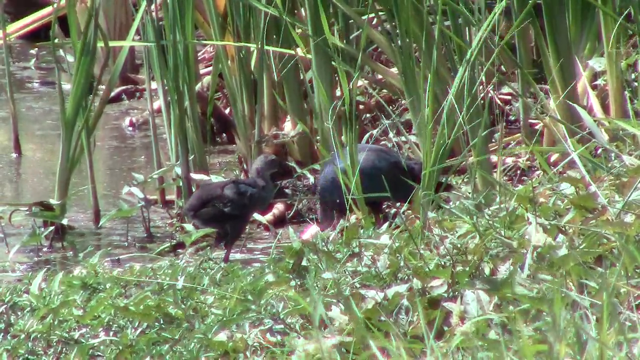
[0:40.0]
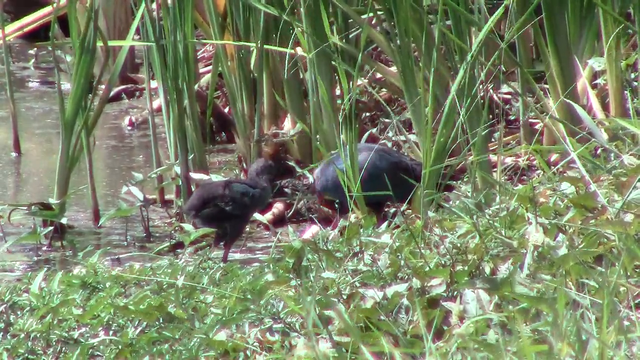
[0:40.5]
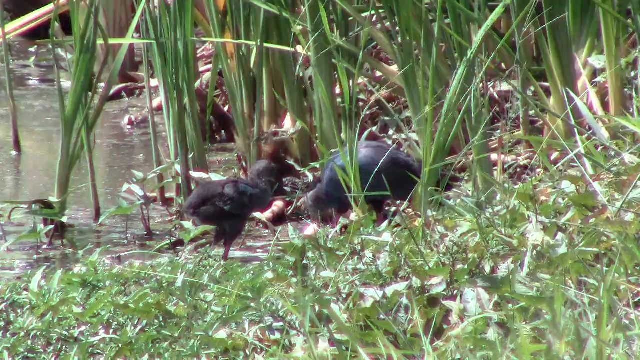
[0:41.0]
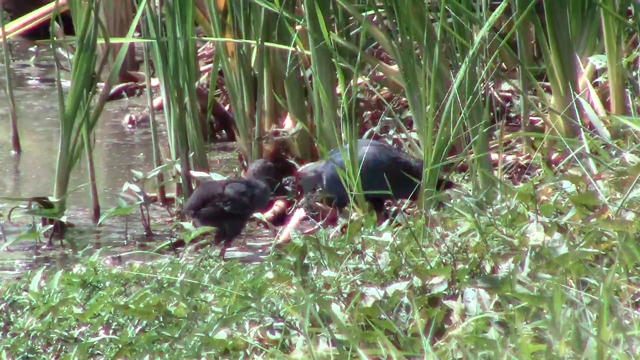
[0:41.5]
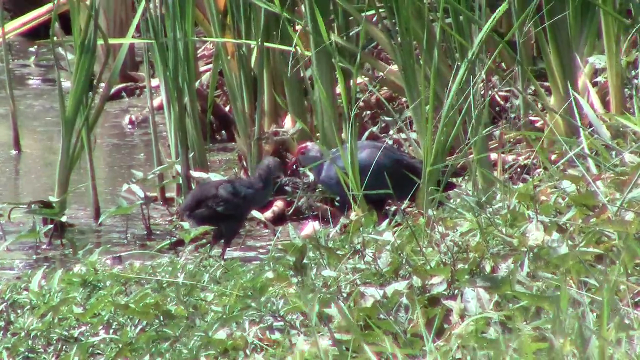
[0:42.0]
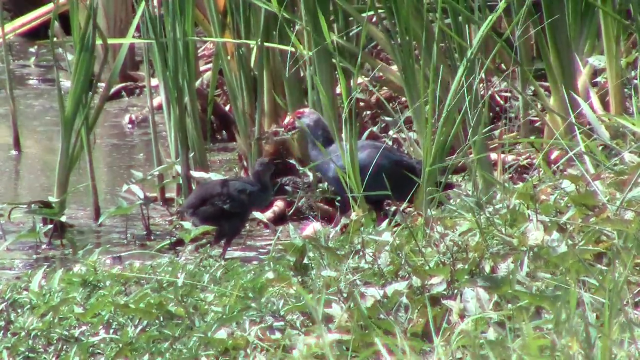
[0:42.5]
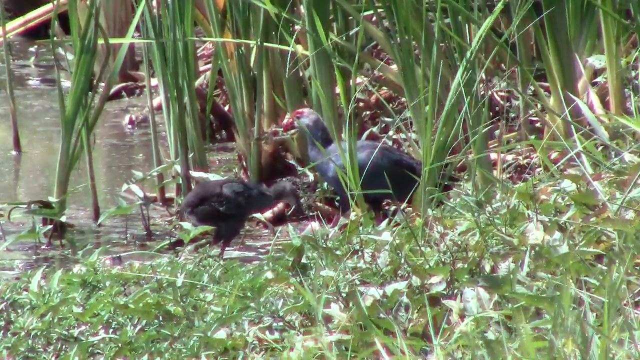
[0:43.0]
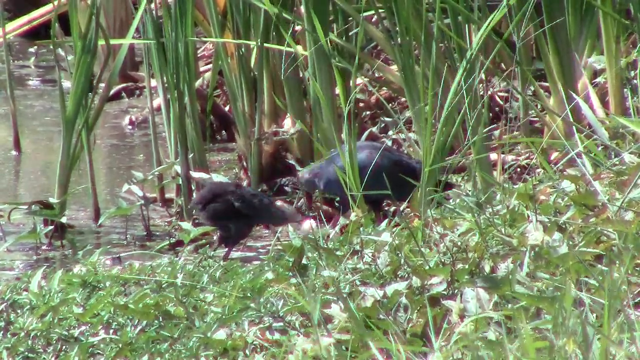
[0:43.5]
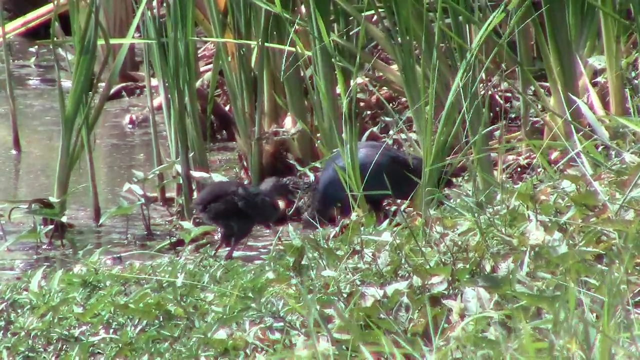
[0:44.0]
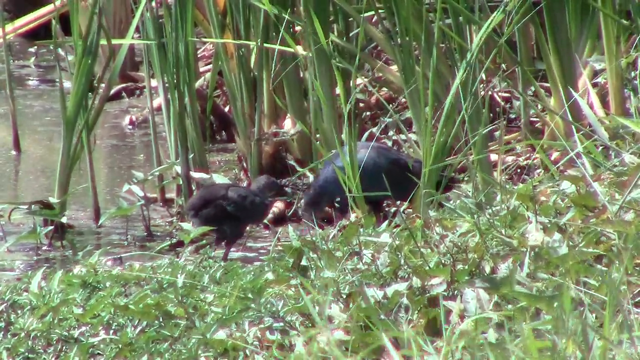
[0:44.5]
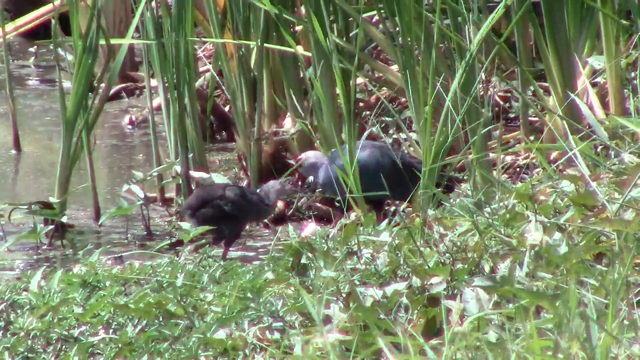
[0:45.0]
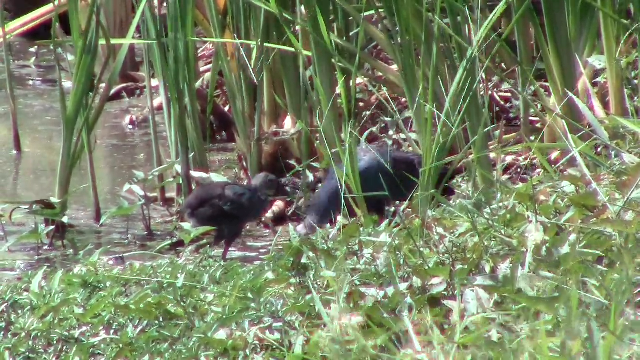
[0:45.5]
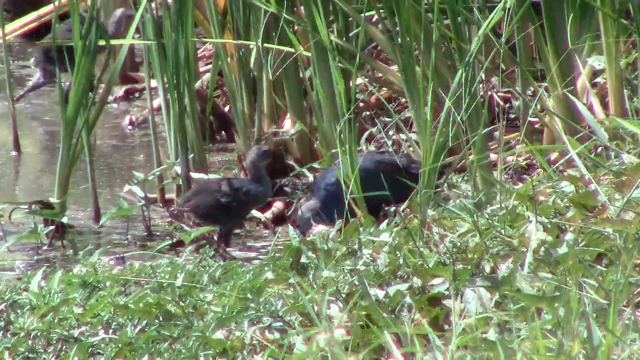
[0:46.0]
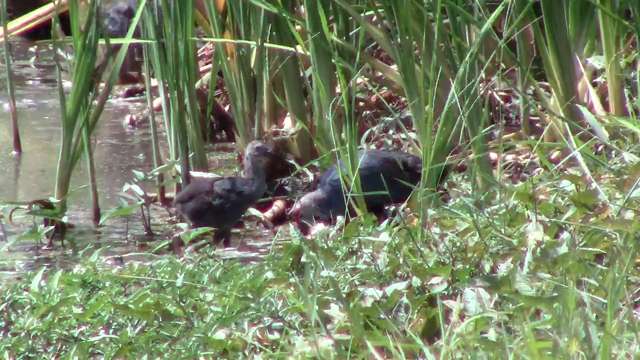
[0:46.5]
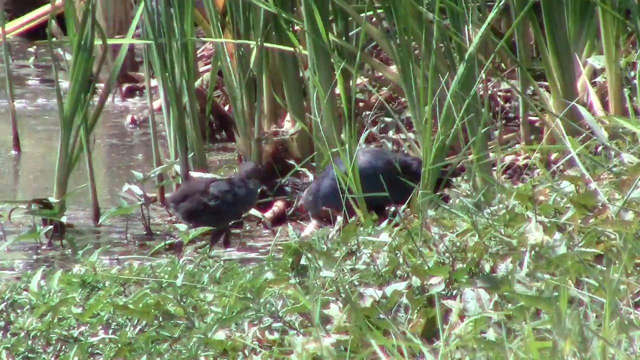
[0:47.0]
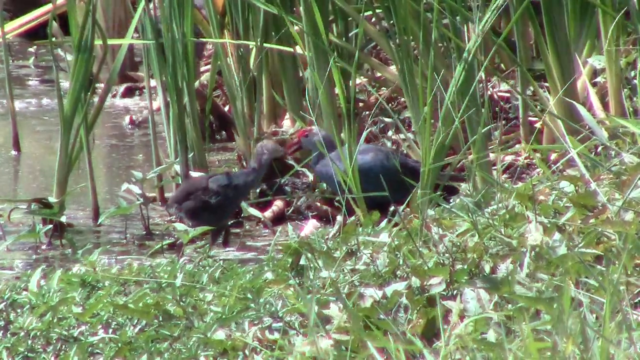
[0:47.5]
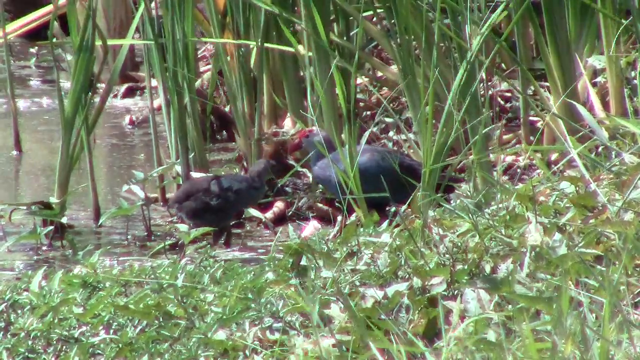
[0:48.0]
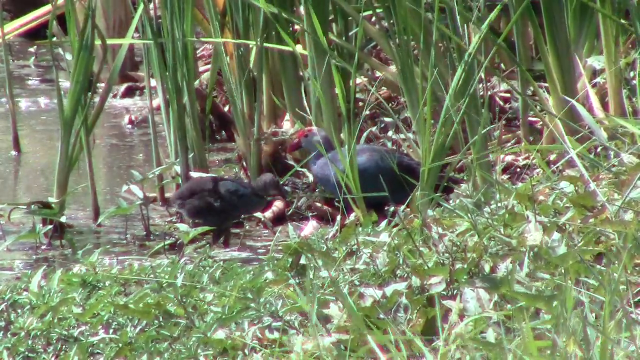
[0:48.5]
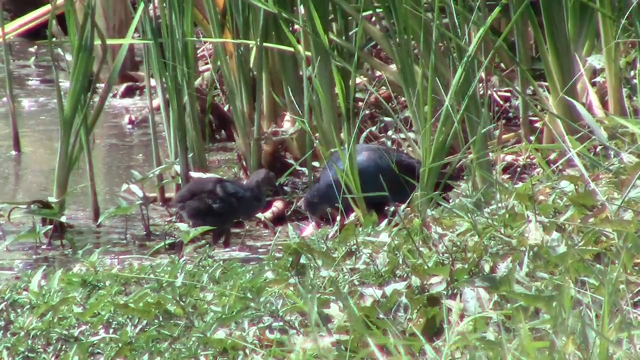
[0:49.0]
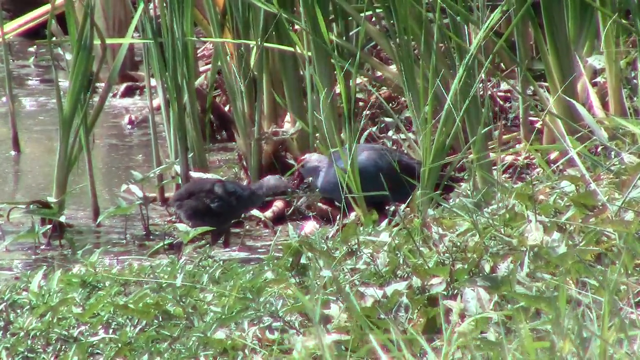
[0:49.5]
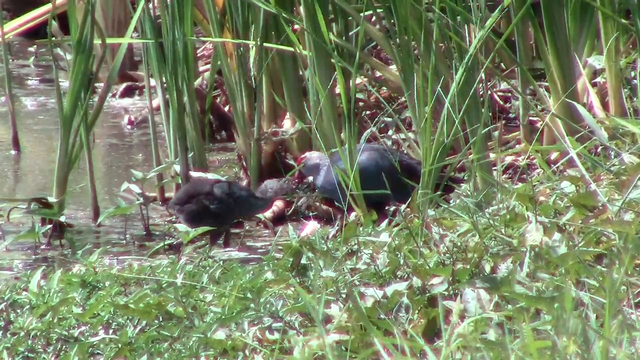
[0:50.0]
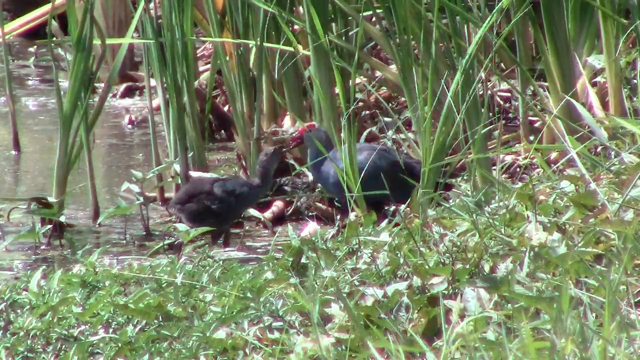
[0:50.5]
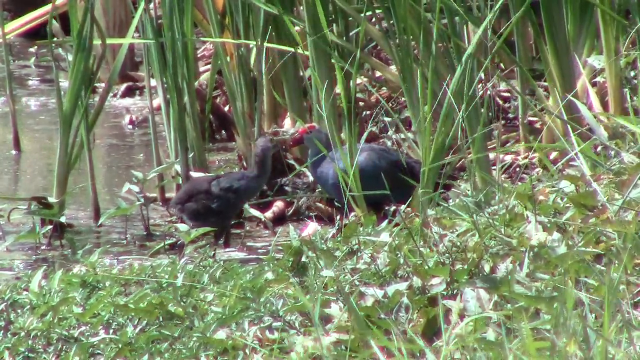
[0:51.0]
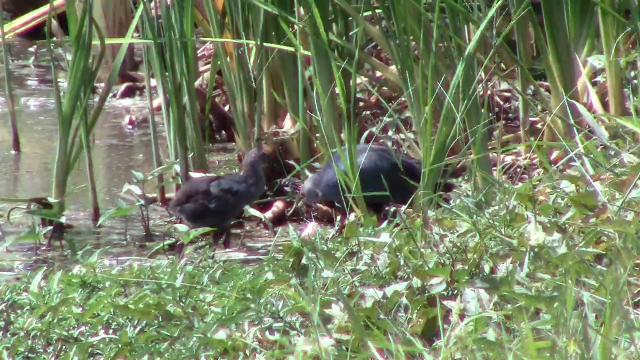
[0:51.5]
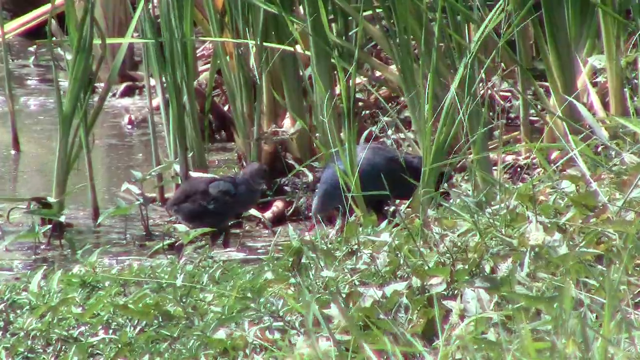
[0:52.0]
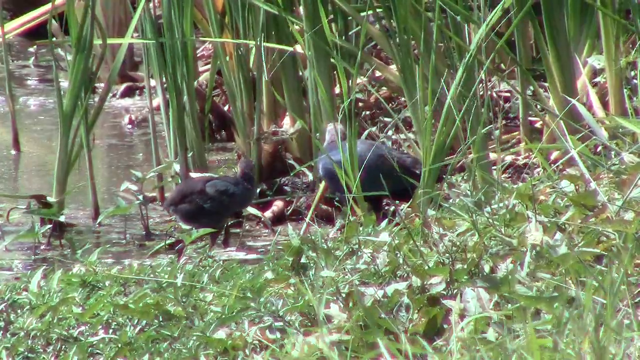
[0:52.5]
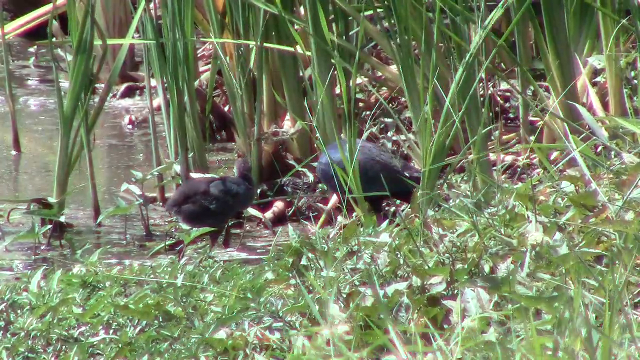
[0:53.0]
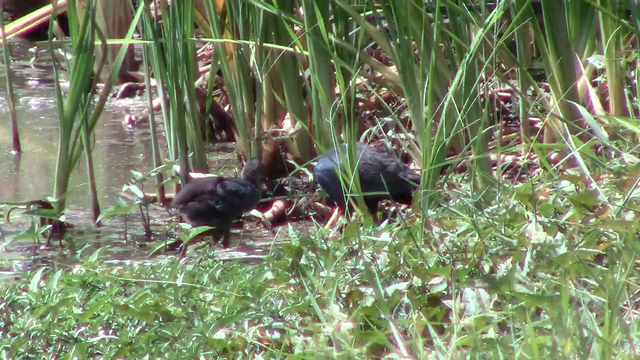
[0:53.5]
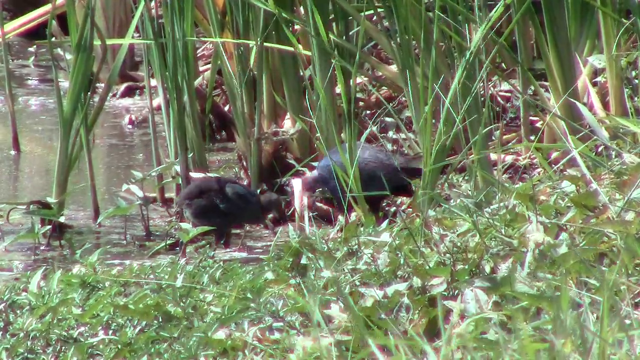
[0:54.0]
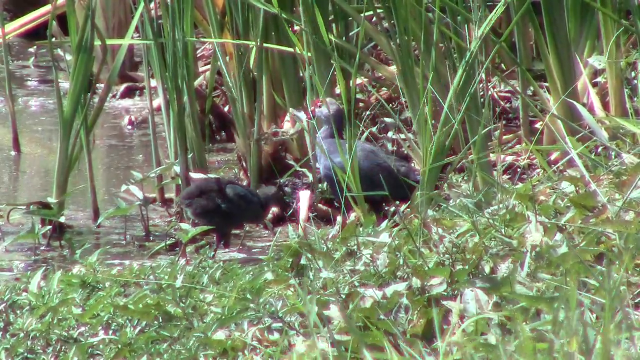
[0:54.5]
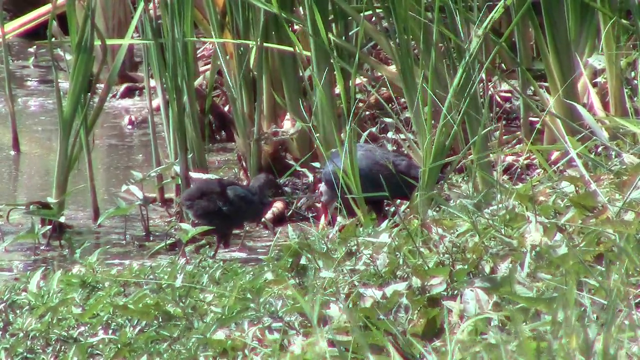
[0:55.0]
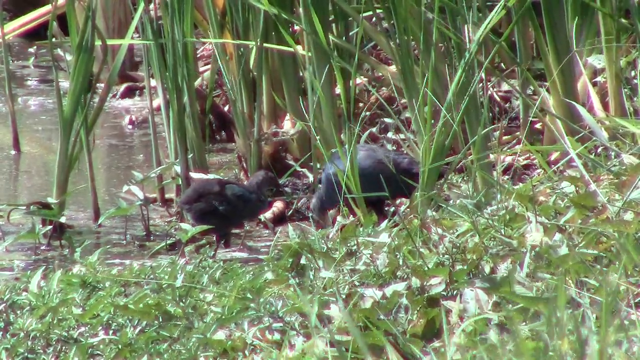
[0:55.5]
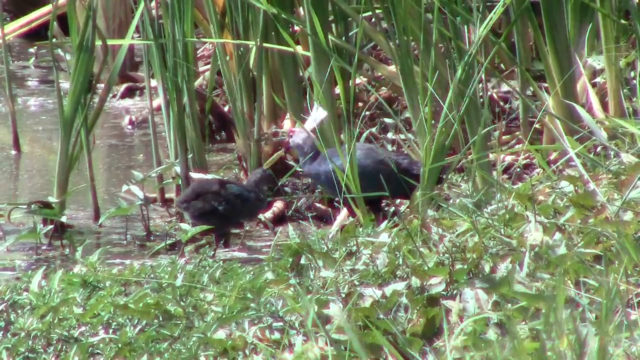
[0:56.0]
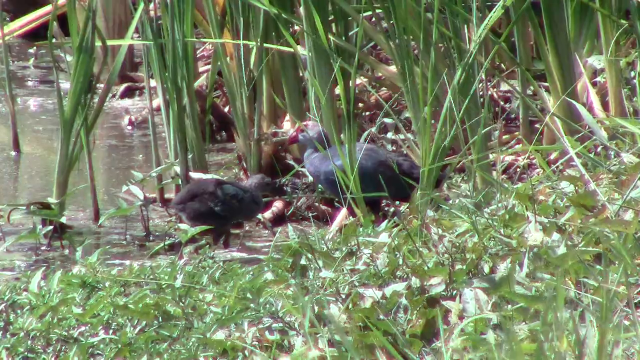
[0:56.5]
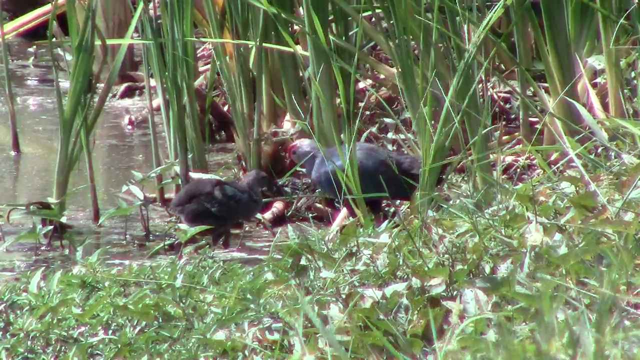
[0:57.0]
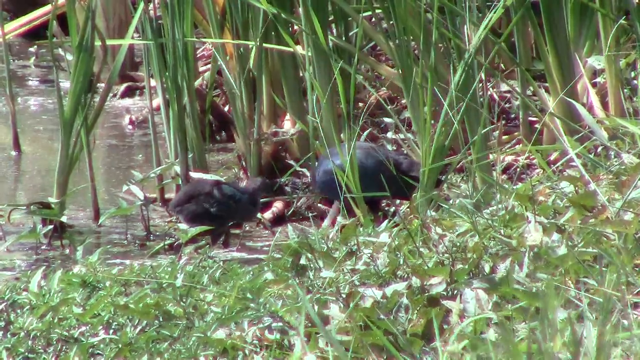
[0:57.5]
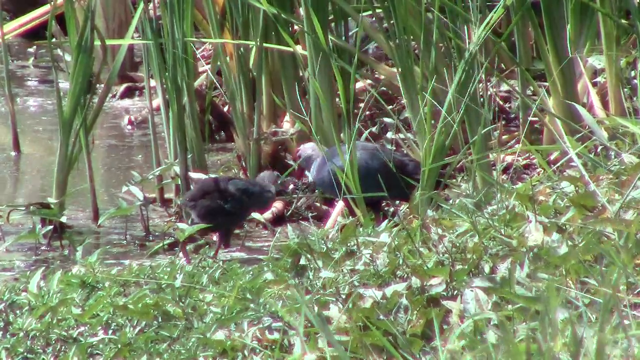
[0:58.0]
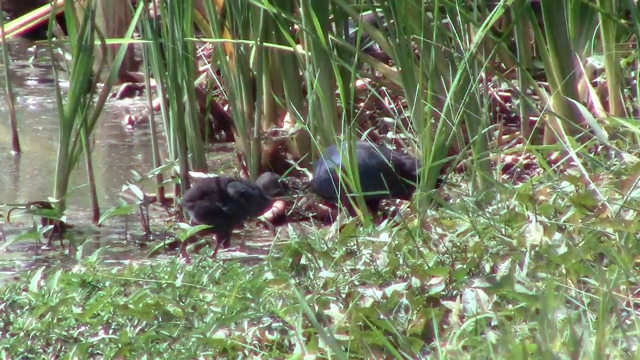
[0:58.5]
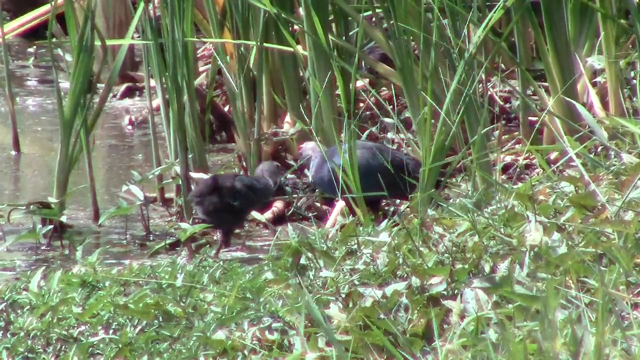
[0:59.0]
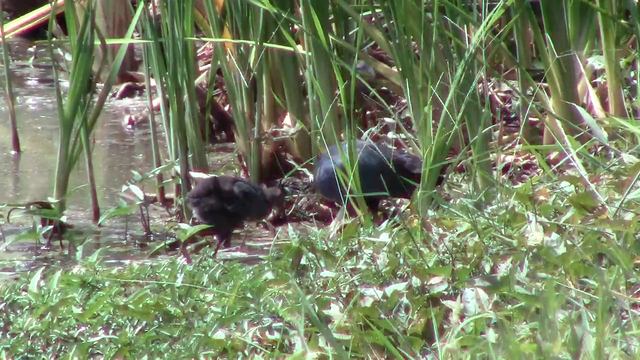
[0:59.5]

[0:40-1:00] The black bird that just flew up and the other bird open their mouths at each other, apparently chirping as if about to argue, while the black bird tries to eat what the other bird worked for. Another black bird, which looks much like the one that flew up, is in the background and does not do anything.